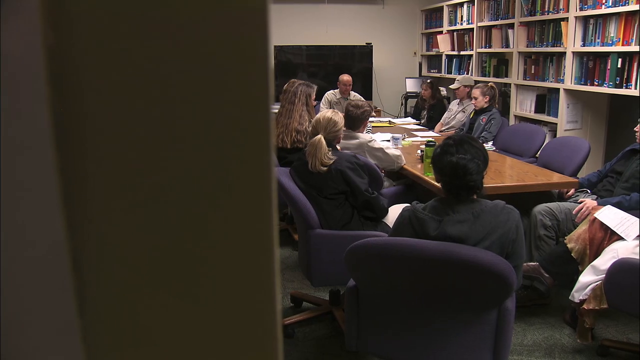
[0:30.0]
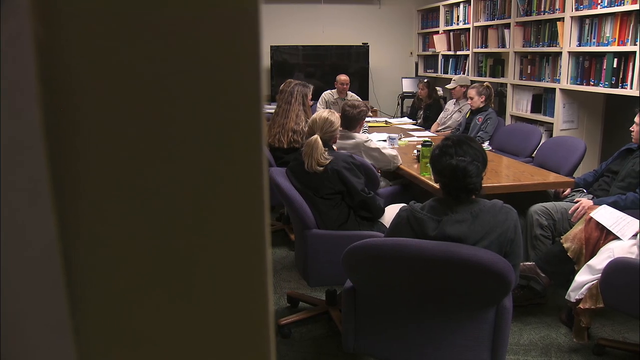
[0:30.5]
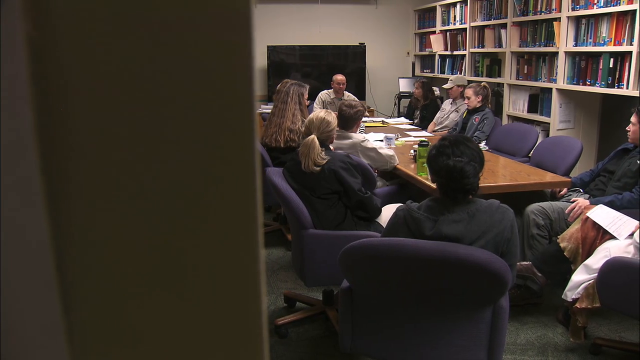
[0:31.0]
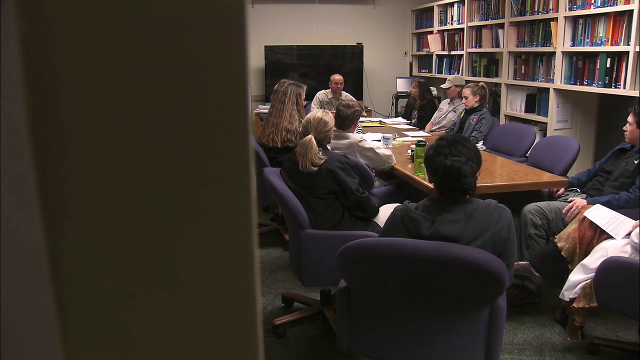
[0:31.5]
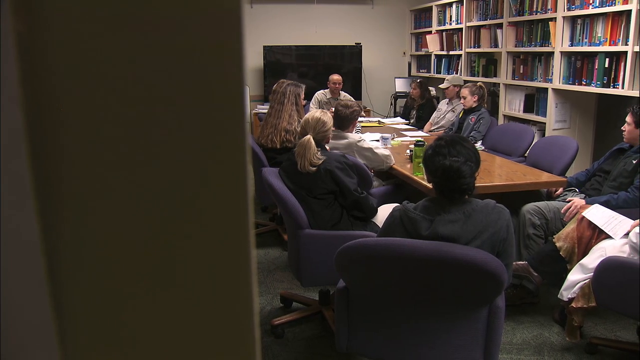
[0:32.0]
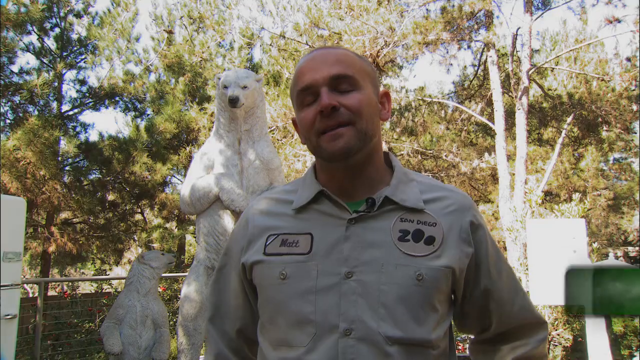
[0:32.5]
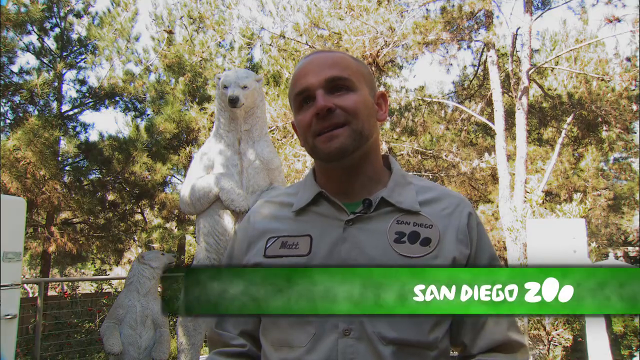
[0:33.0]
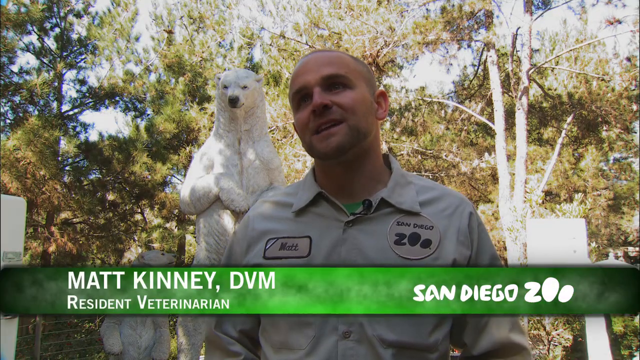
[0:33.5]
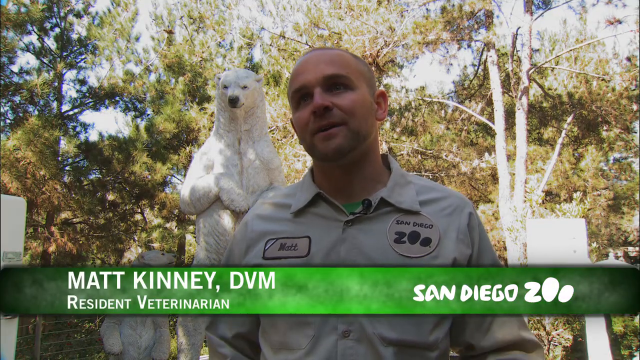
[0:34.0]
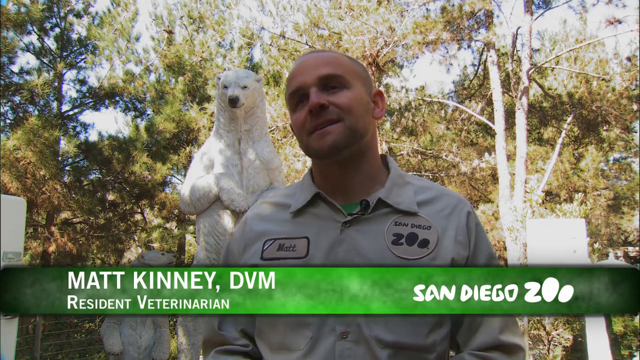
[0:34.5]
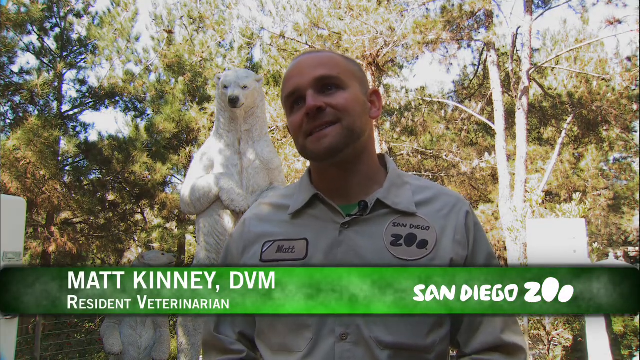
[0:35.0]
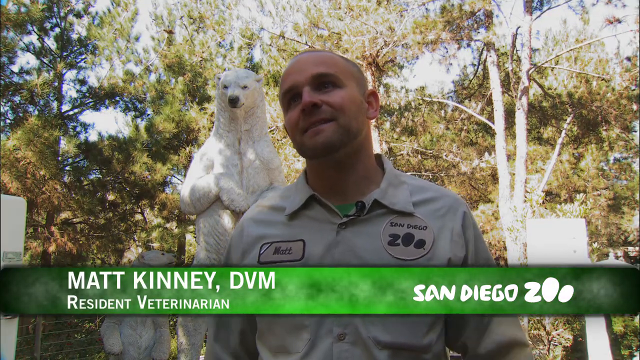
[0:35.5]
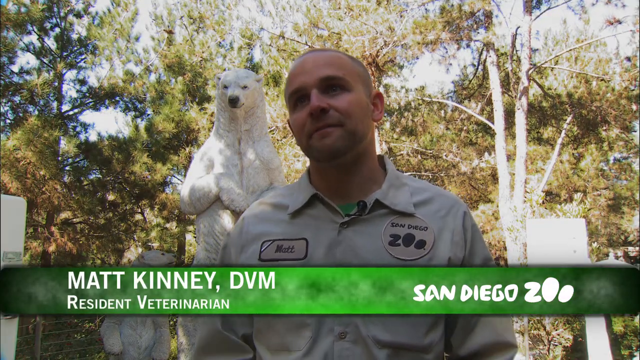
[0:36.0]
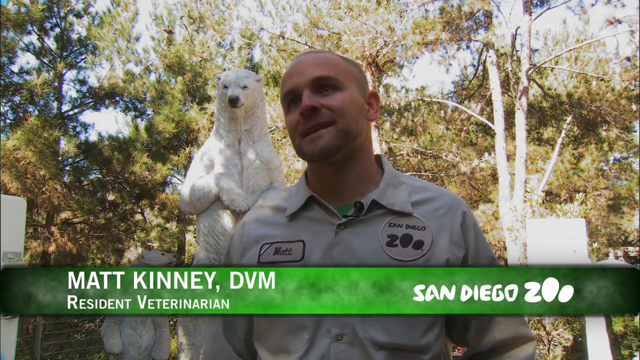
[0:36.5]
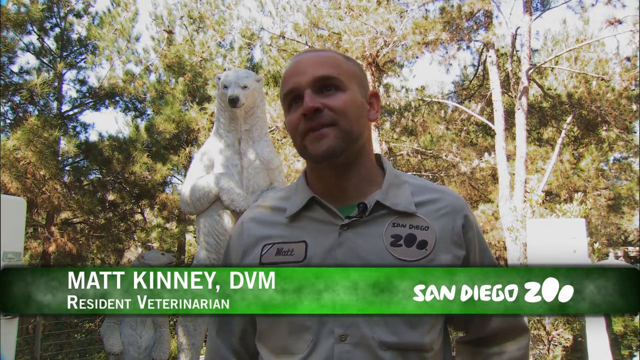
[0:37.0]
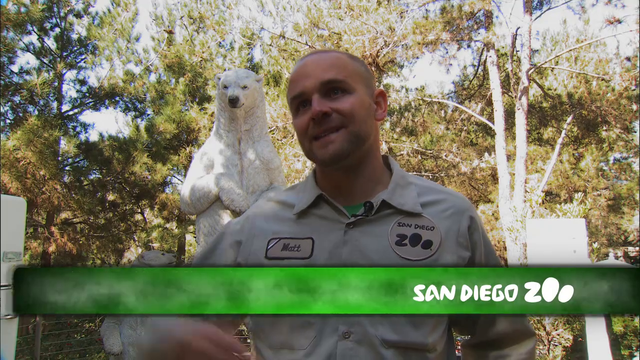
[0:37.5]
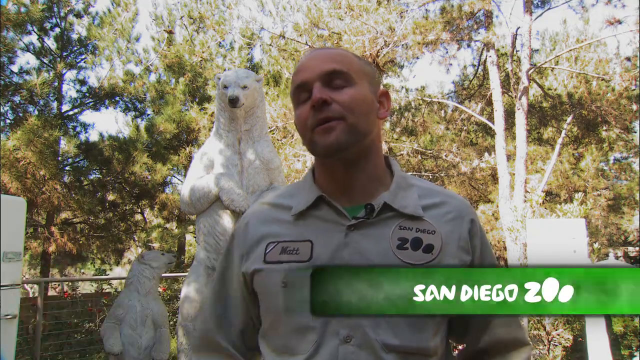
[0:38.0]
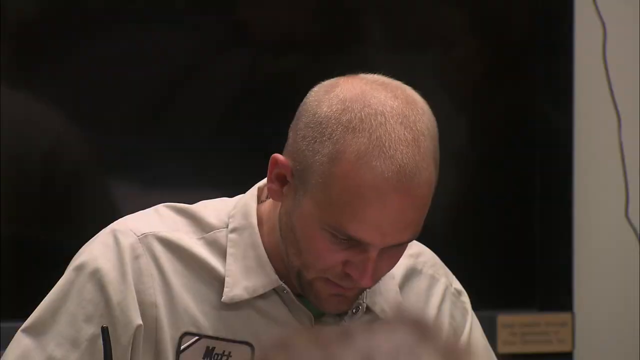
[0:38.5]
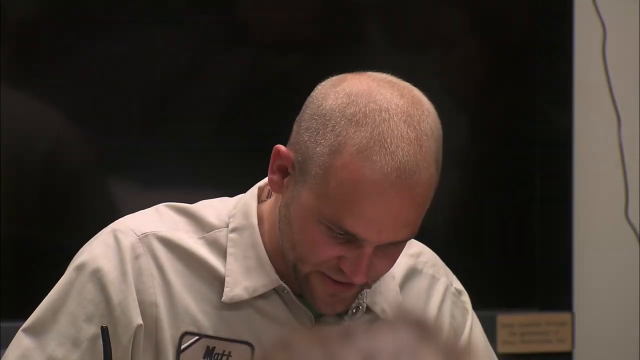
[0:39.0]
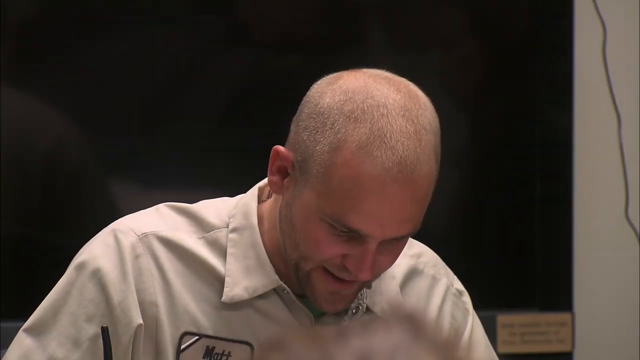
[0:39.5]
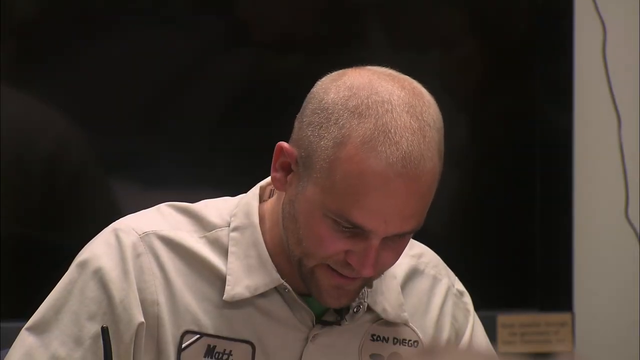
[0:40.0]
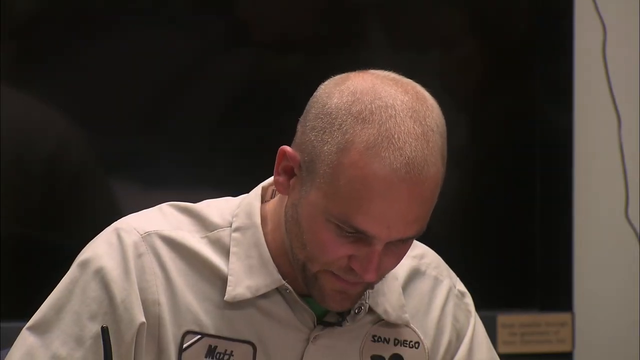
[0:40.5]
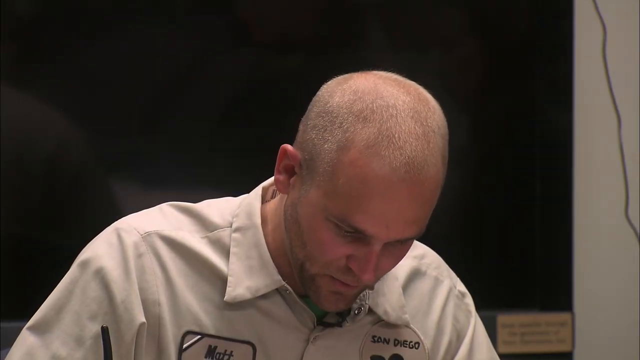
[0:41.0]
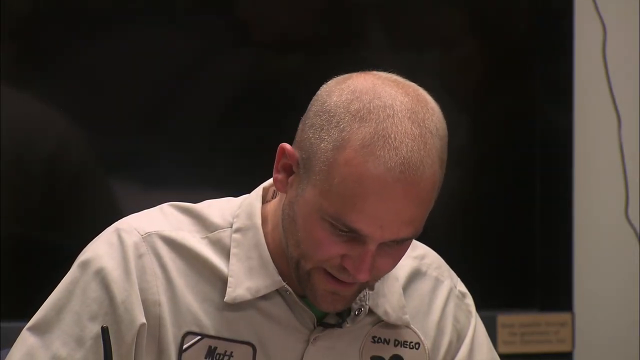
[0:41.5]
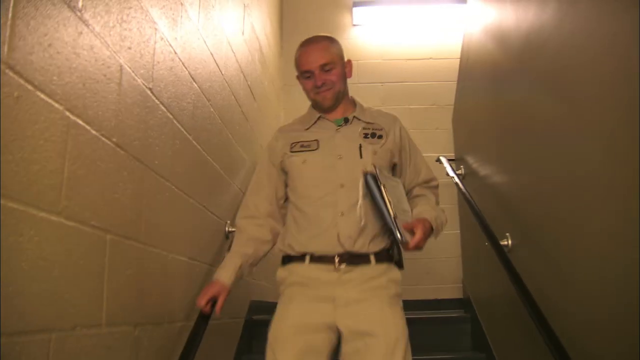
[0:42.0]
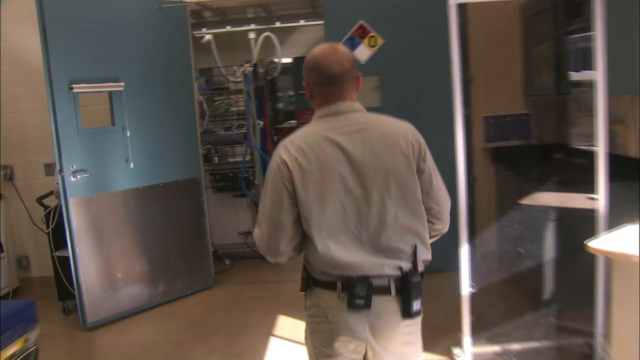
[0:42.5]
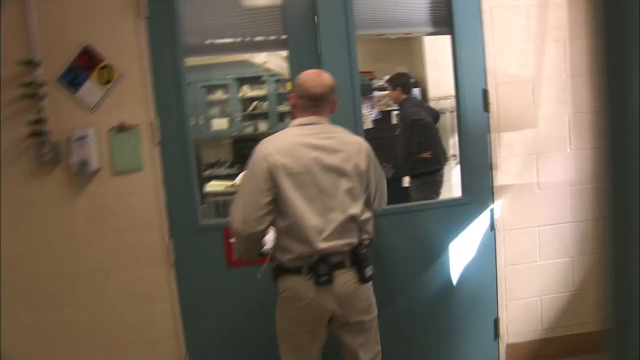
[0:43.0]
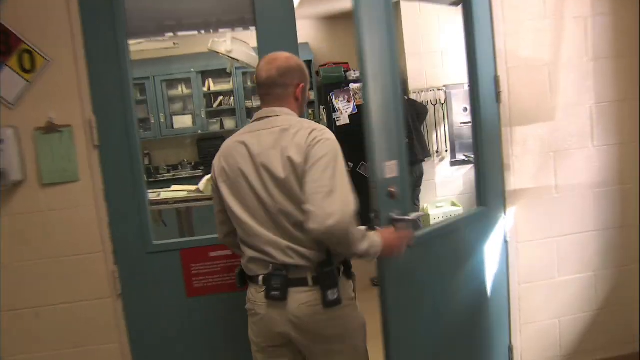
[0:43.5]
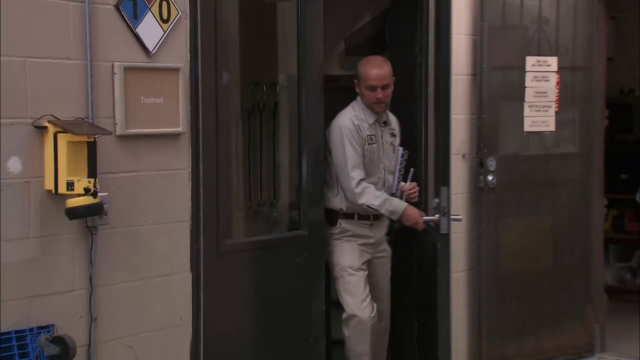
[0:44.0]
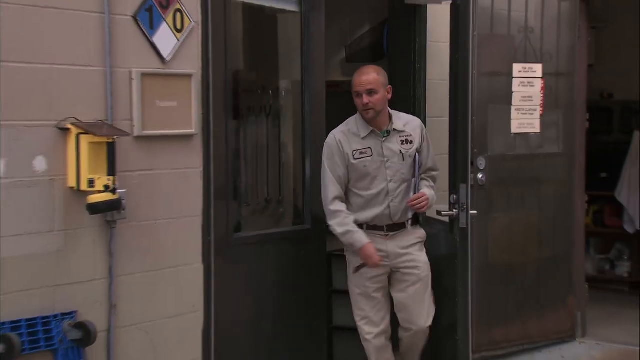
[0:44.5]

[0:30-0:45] The group of veterinarians is shown, and then the video switches to a different scene. The main veterinarian is identified as Matt Kinney, DVM, the resident veterinarian of the San Diego Zoo. He wears his uniform and stands outside, with trees in the background and what looks like a statue of a polar bear rather than a real one. The video briefly returns to the table scene, then shows him walking around the building with his radio equipment and uniform, holding some paperwork, probably related to medical issues with the animals.